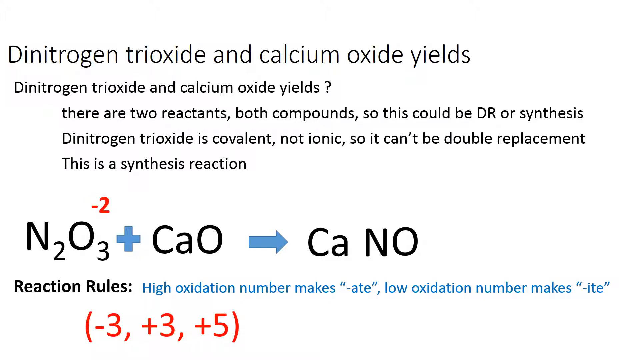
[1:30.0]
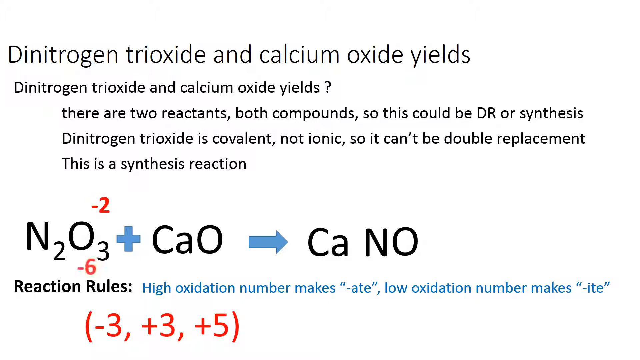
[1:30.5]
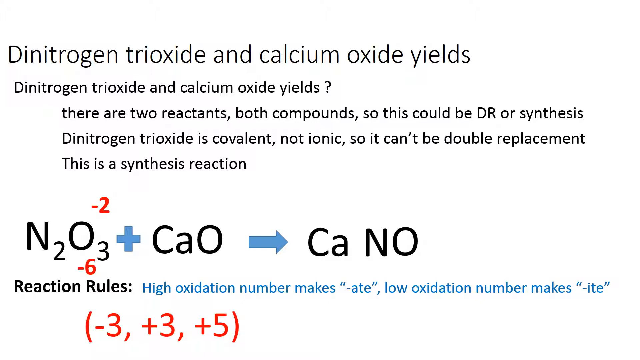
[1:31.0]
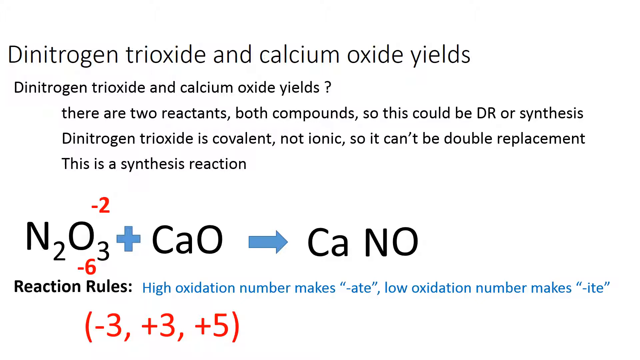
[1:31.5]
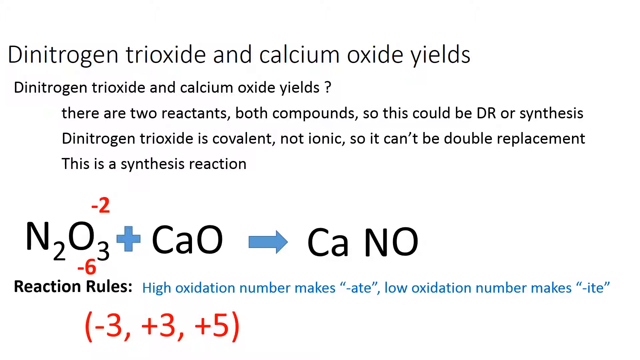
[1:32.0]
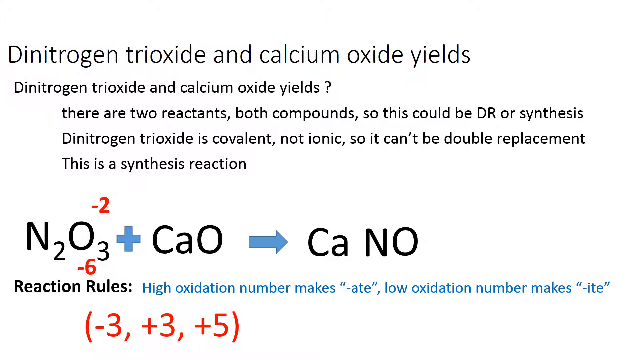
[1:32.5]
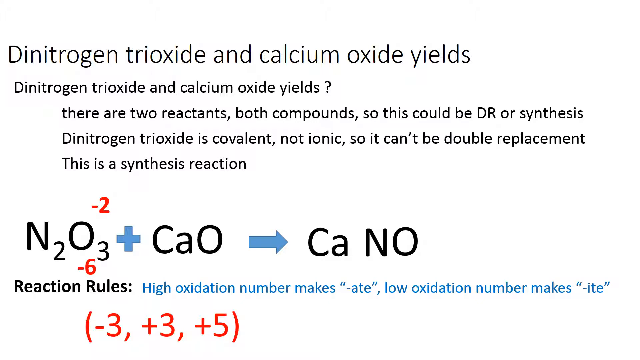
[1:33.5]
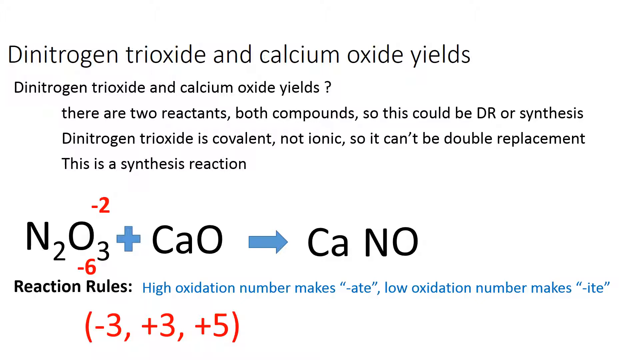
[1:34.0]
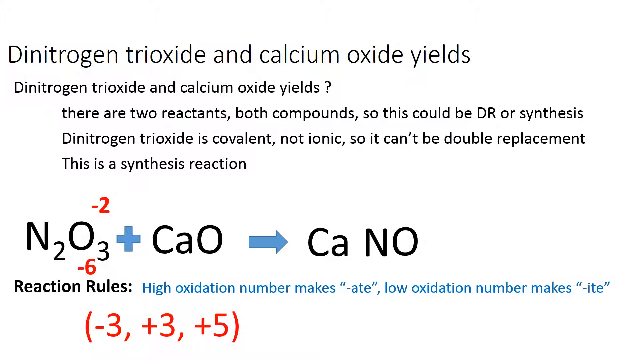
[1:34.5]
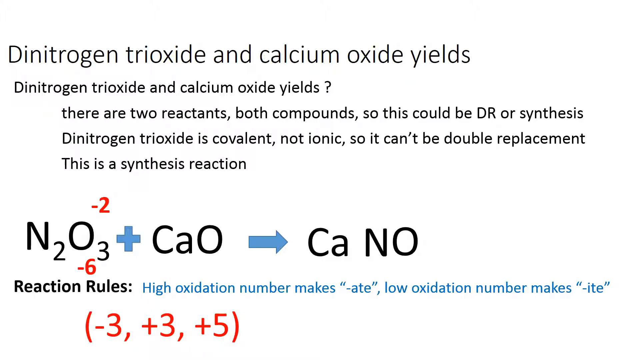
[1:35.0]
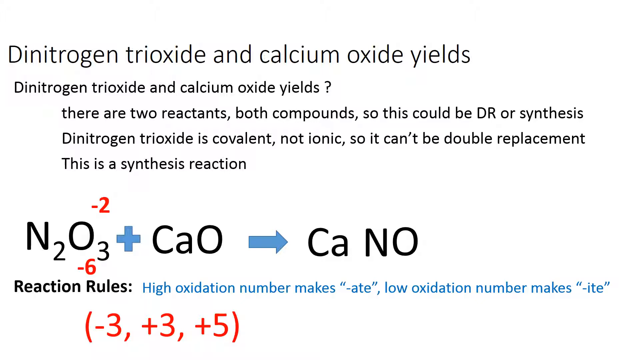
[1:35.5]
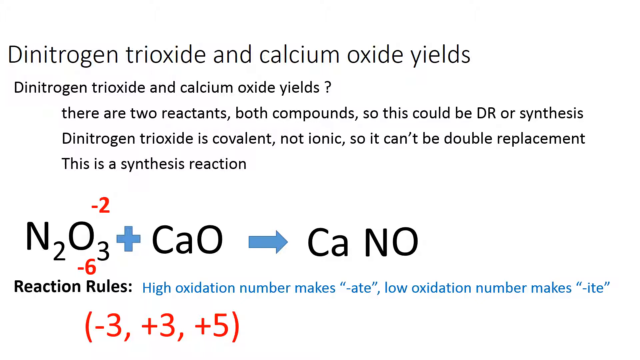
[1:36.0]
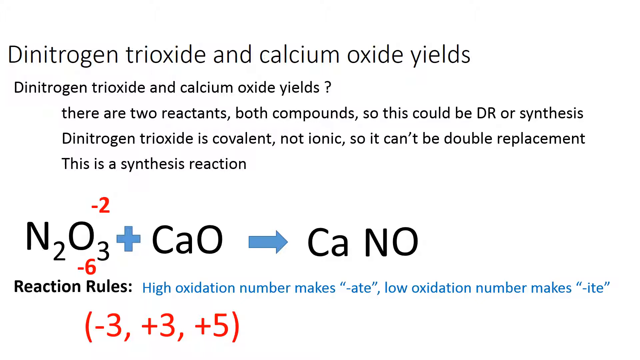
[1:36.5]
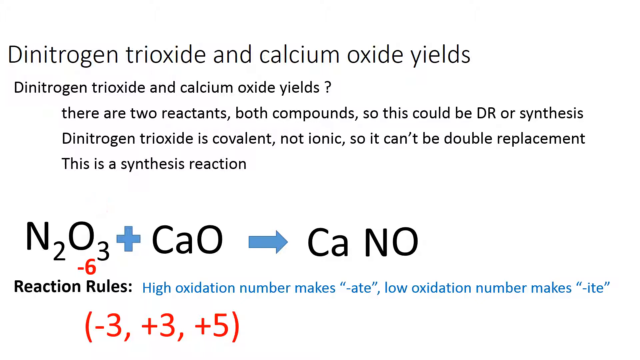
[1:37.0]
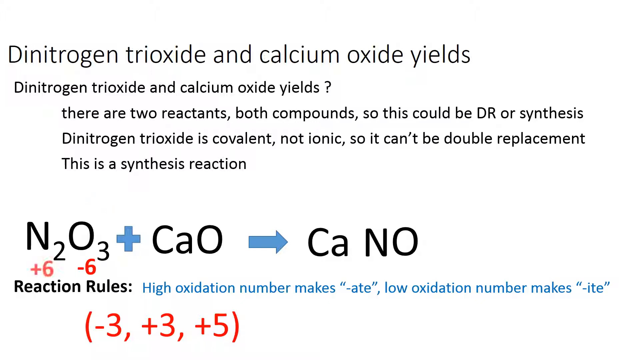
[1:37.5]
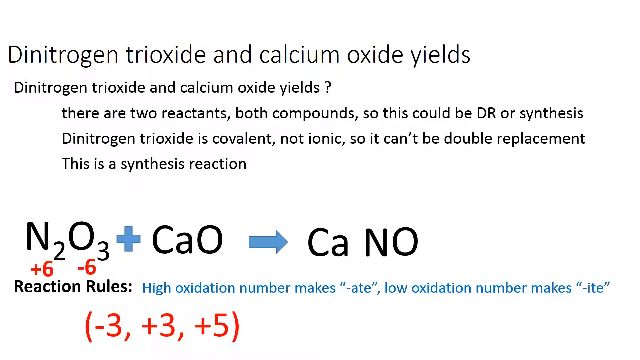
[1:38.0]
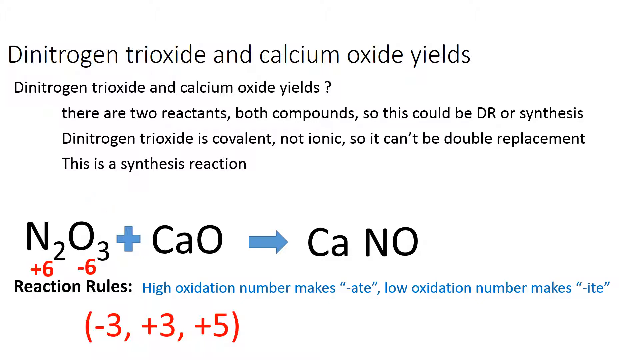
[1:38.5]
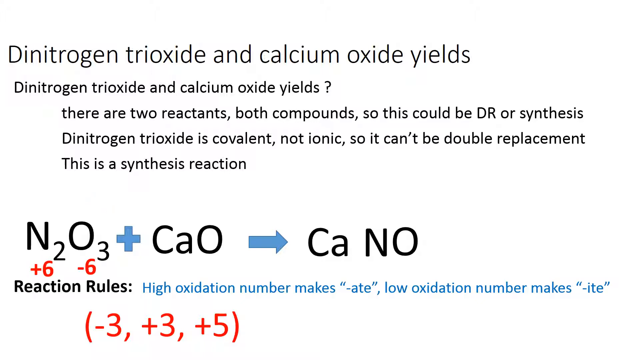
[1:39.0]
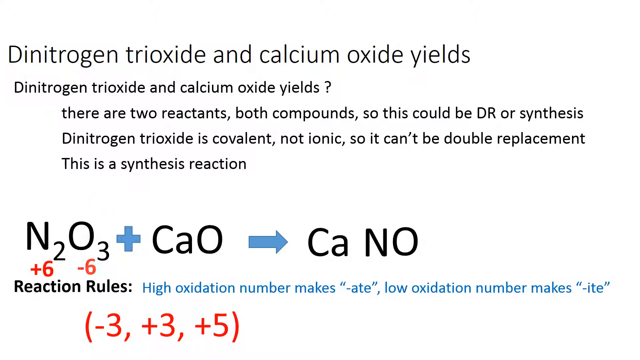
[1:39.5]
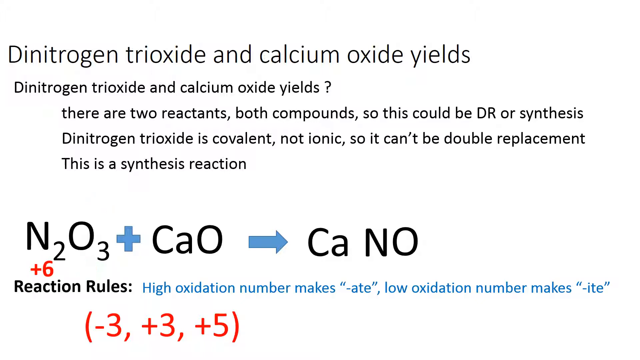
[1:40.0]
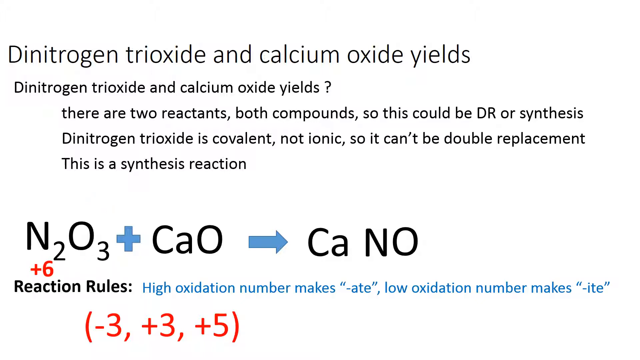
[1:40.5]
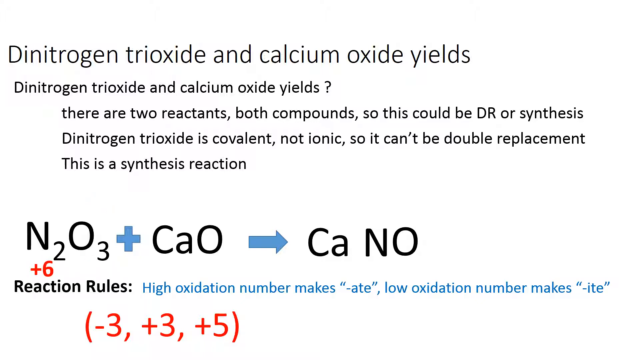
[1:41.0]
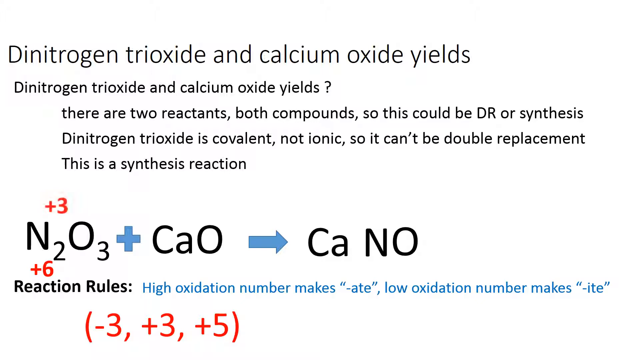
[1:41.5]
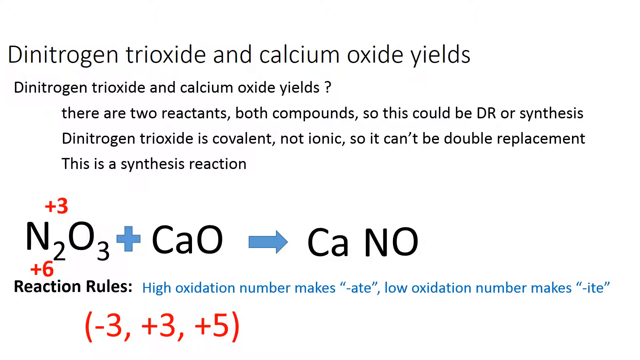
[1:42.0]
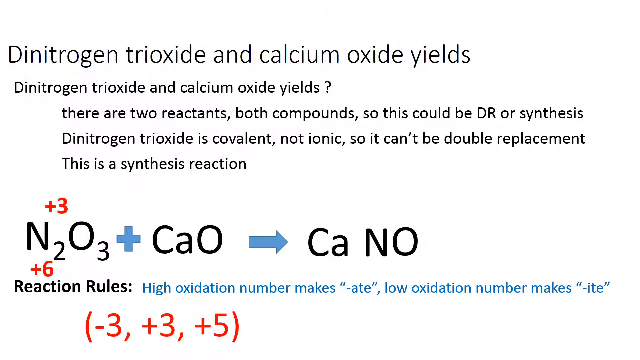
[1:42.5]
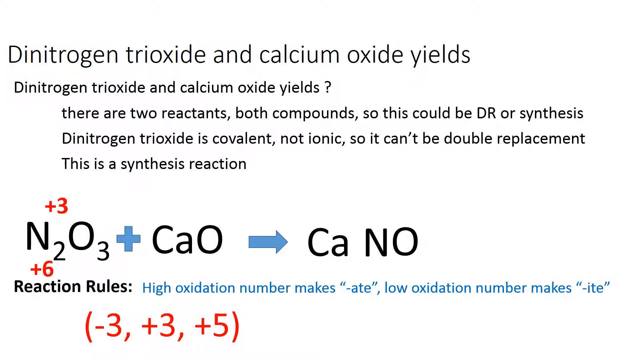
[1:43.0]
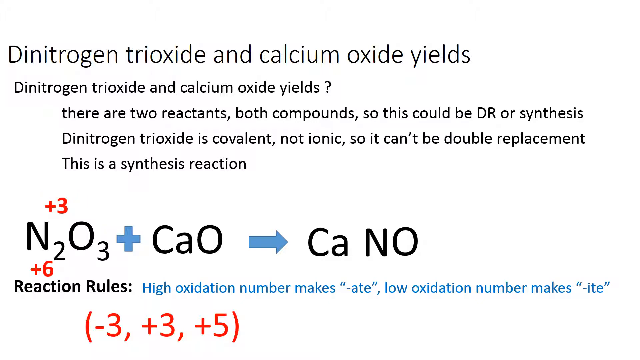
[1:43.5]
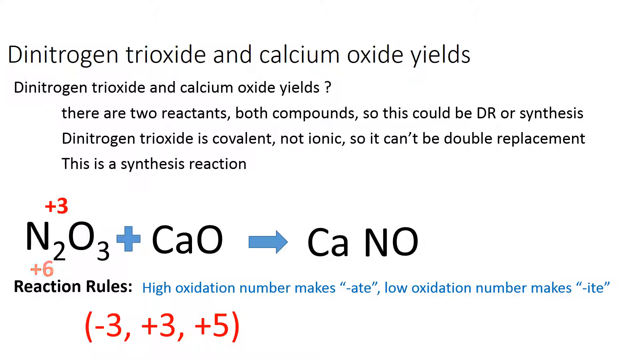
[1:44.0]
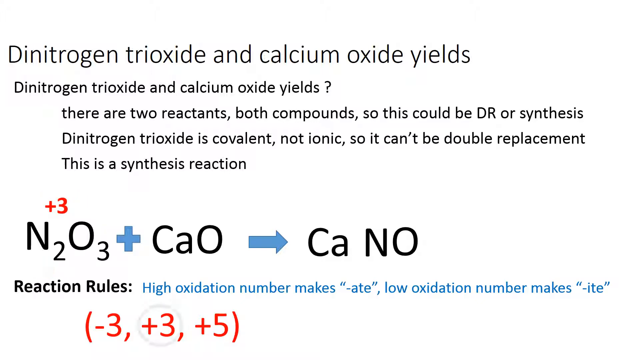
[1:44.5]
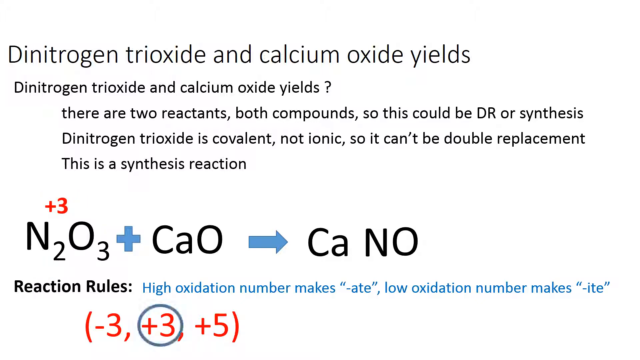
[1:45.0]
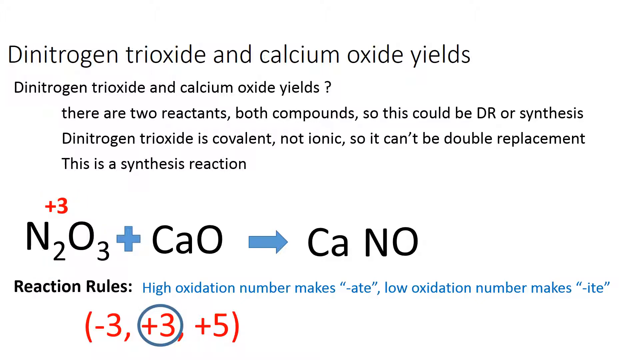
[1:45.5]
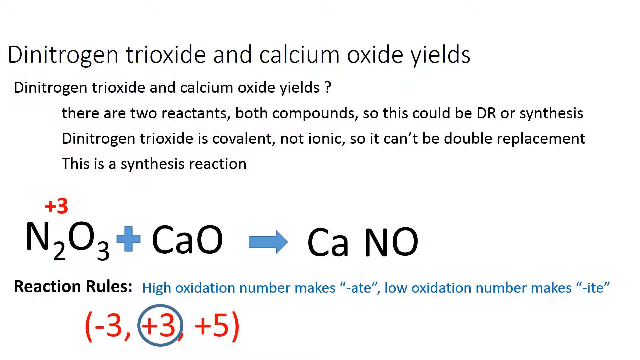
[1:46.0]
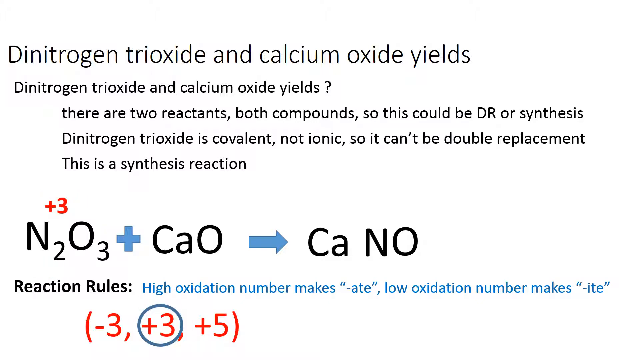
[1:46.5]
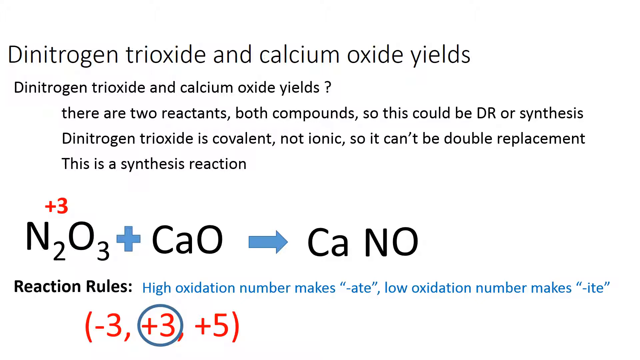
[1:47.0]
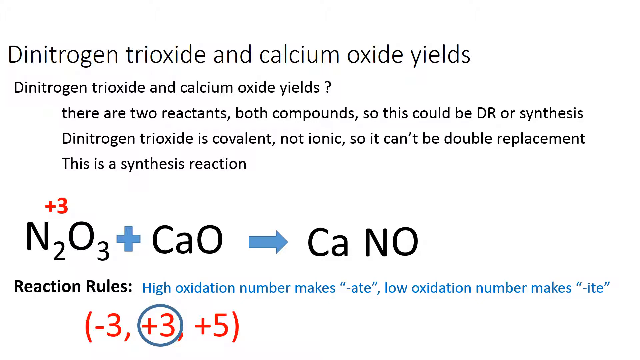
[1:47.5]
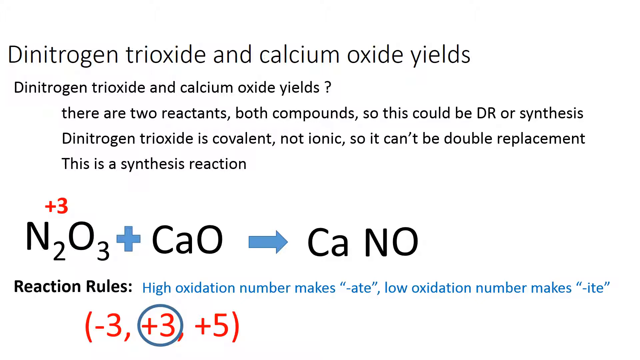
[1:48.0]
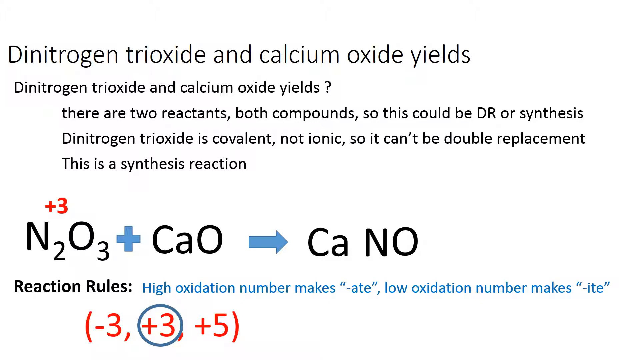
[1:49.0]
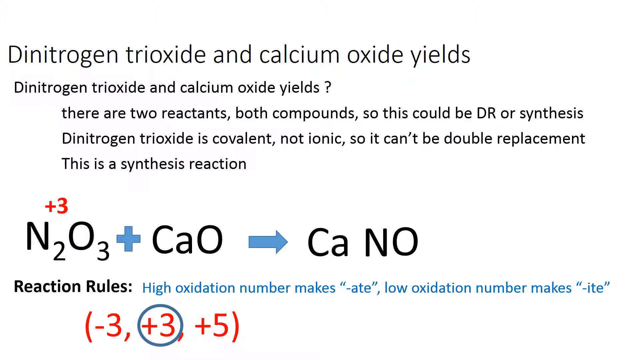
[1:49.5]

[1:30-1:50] The white background is covered with text. Black text at the top says "Dinitrogen Trioxide and calcium oxide yields." Beneath it, smaller black text says "Dinitrogen trioxide and calcium oxide yields" with a ? to its right, followed by black lines saying "there are two reactants, both compounds, so this could be DR or synthesis," "Dinitrogen trioxide is covalent, not ionic, so it can't be double replacement," and "This is a synthesis reaction." Beneath that is larger black text "N2O3," a blue + mark, and black text "CaO." Red text that says "-2" is above "N2O3." To the right is a blue arrow, black text "Ca," and black text "NO." Below is black text "Reaction Rules:" with blue text saying "High oxidation number makes "-ate", low oxidation number makes "-ite"," and beneath that red text "(-3, +3, +5)." Beneath "N2O3," red text appears saying "-6" on the right and "+6" on the left. The red "-2" and "-6" around "N2O3" disappear. Red text that says "+3" appears over "N2O3." The red text below "N2O3" disappears. A blue circle appears around the +3 in the red "(-3, +3, +5)" at the bottom.